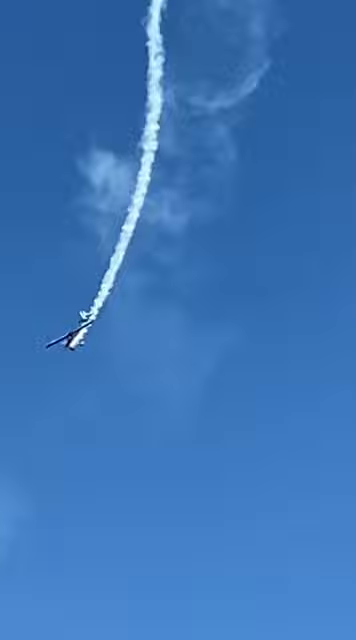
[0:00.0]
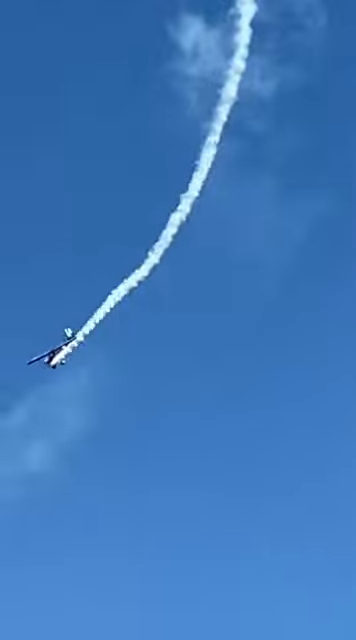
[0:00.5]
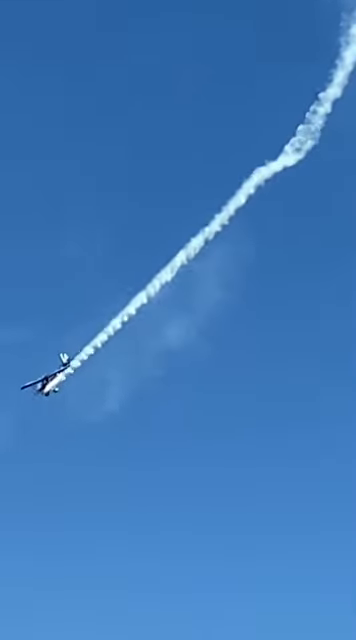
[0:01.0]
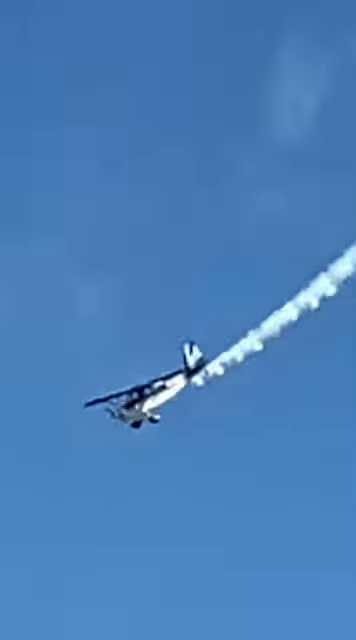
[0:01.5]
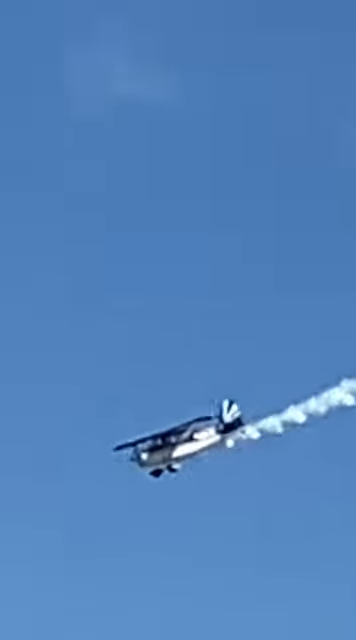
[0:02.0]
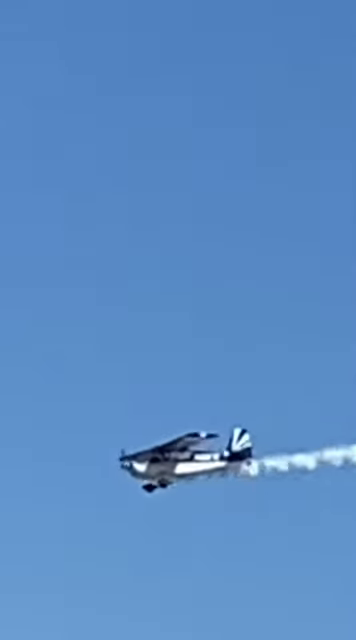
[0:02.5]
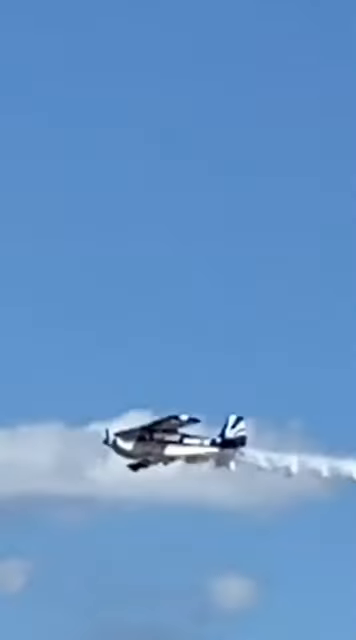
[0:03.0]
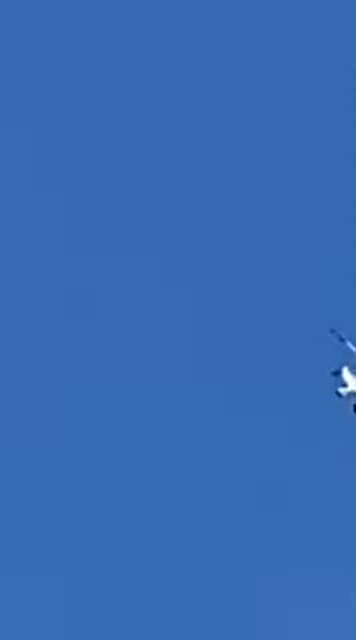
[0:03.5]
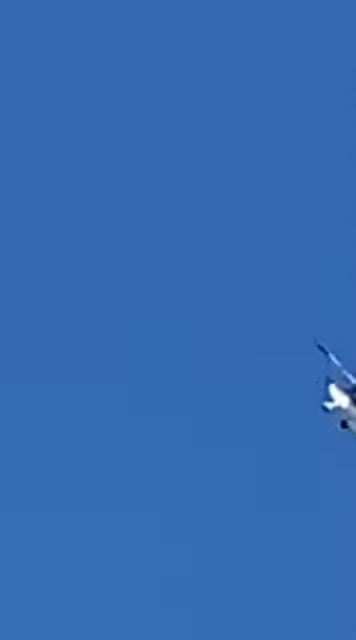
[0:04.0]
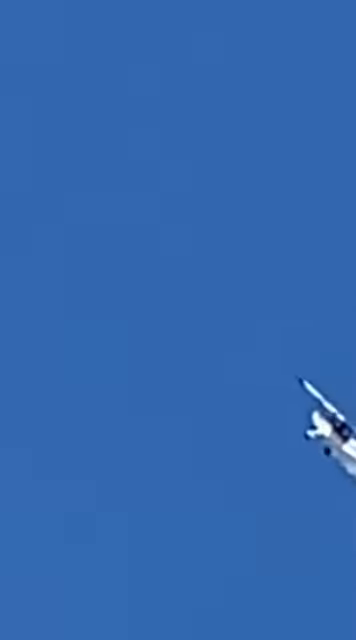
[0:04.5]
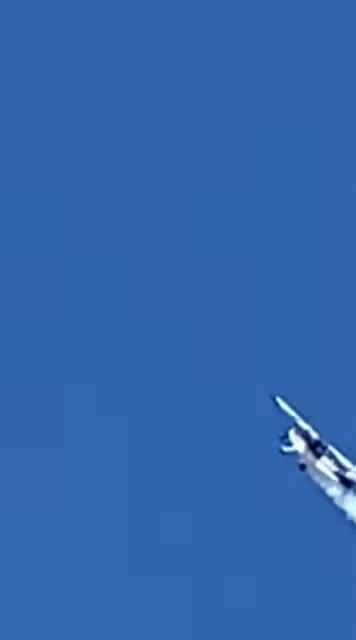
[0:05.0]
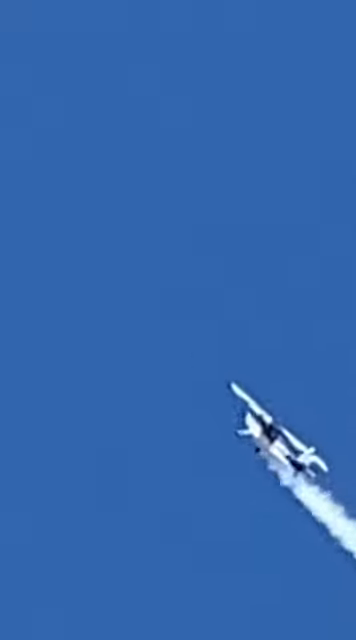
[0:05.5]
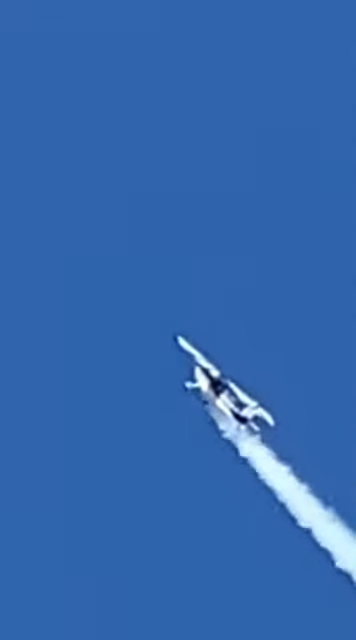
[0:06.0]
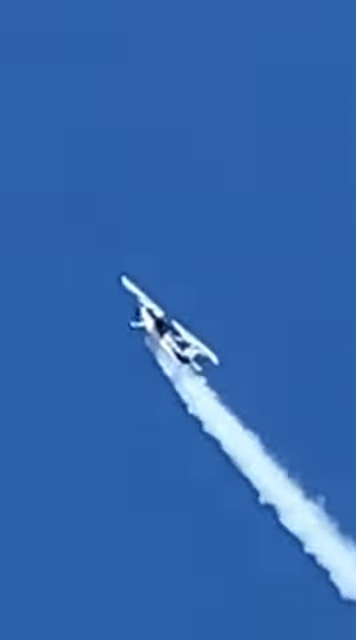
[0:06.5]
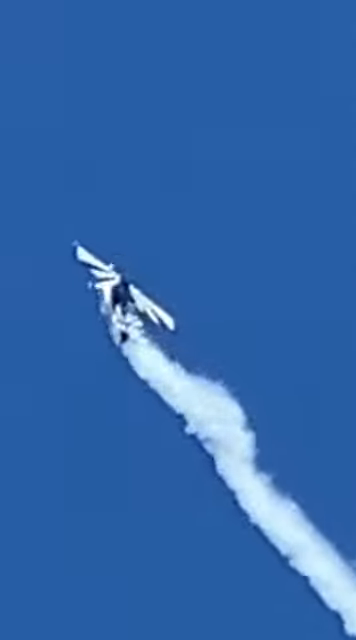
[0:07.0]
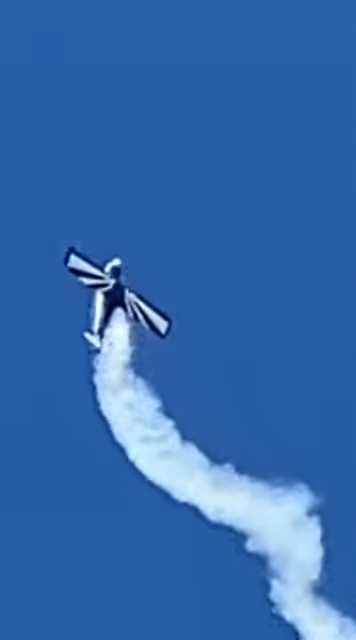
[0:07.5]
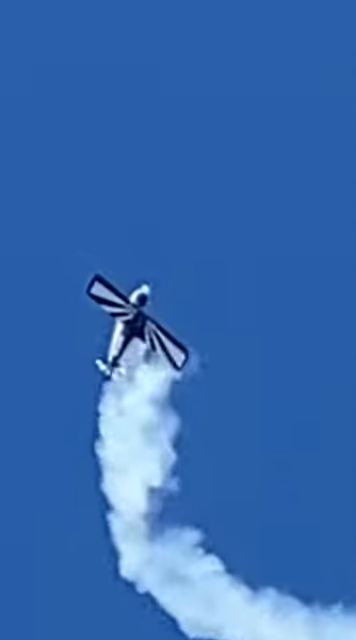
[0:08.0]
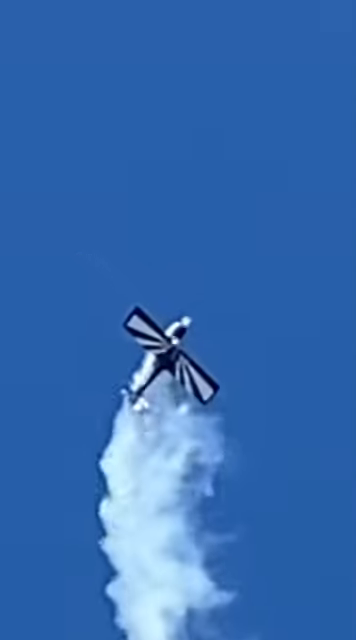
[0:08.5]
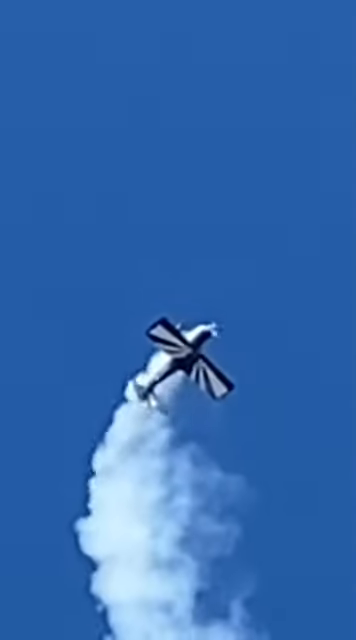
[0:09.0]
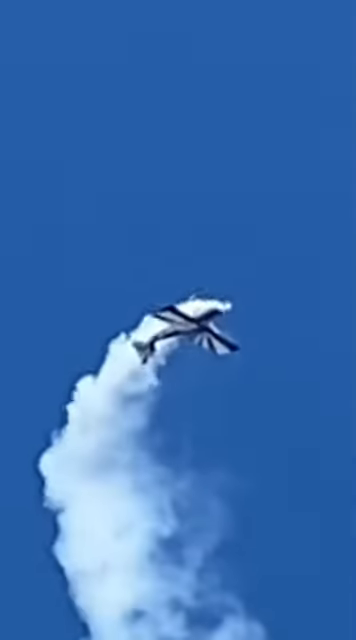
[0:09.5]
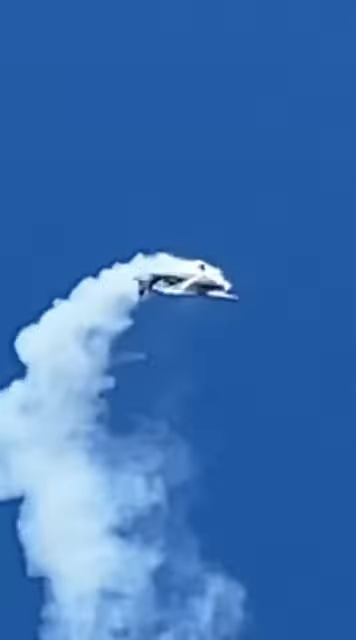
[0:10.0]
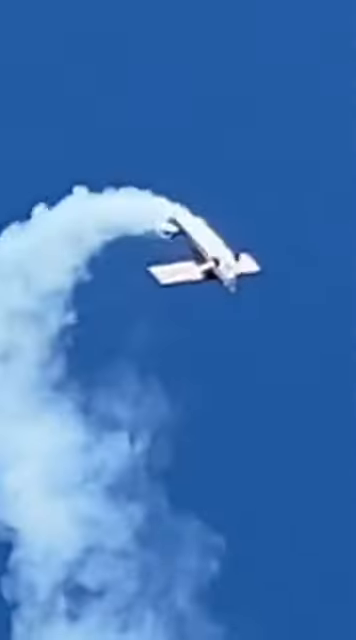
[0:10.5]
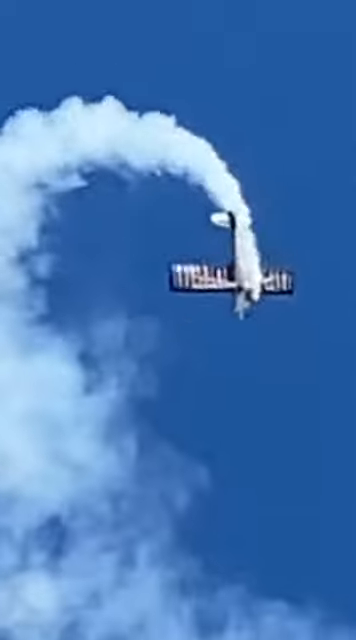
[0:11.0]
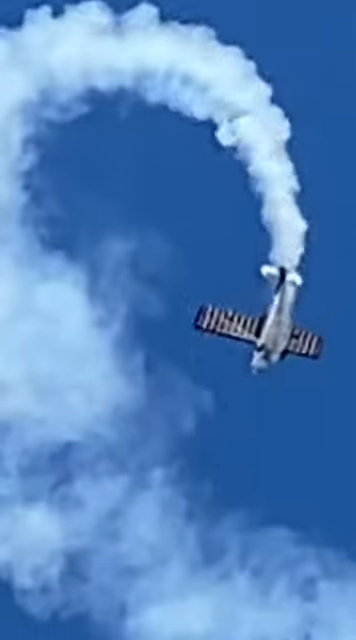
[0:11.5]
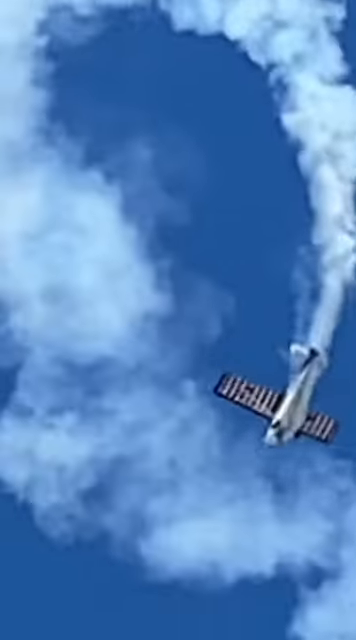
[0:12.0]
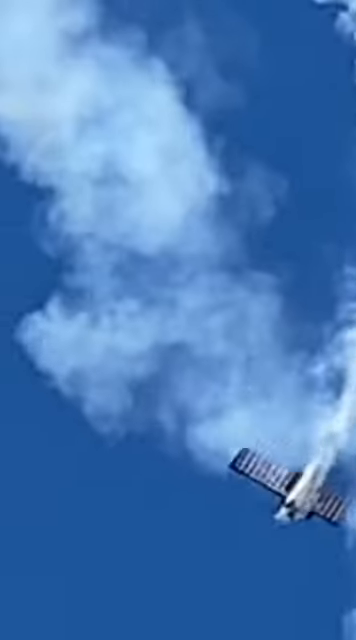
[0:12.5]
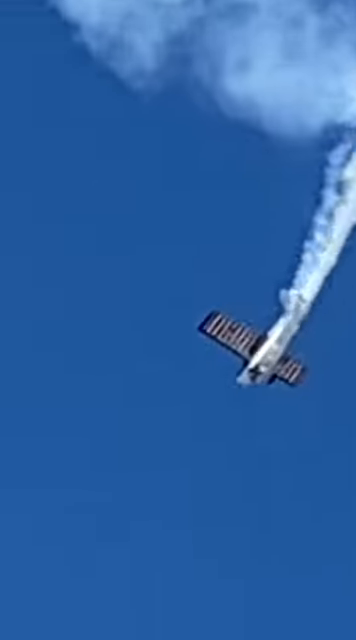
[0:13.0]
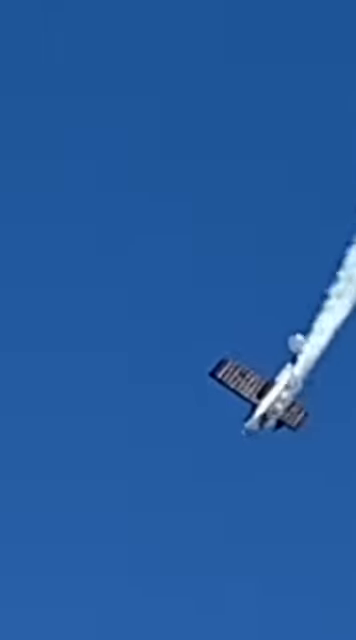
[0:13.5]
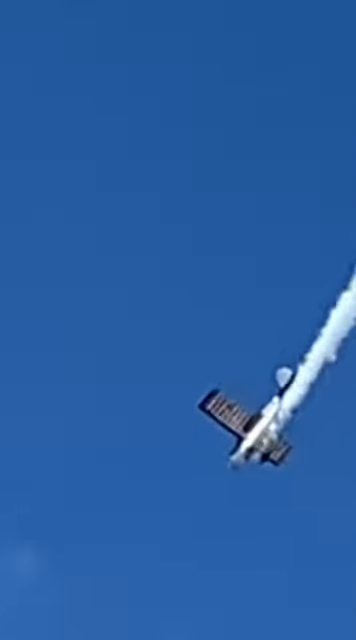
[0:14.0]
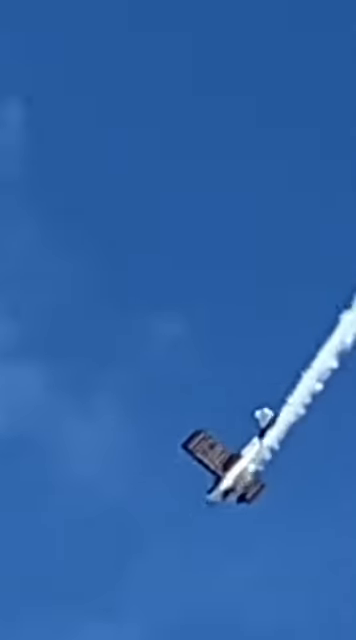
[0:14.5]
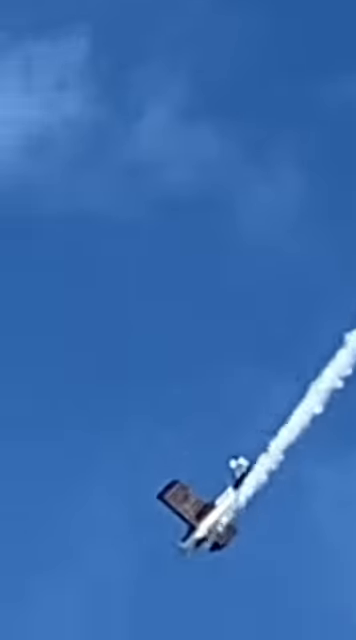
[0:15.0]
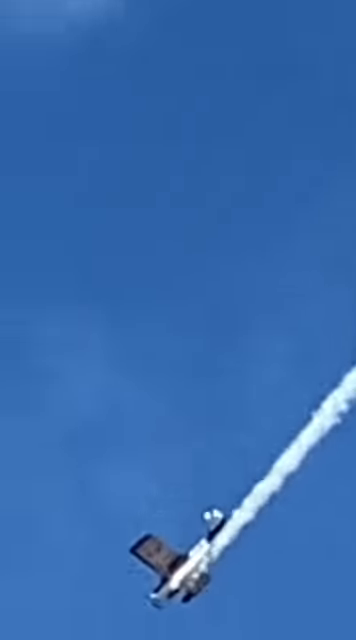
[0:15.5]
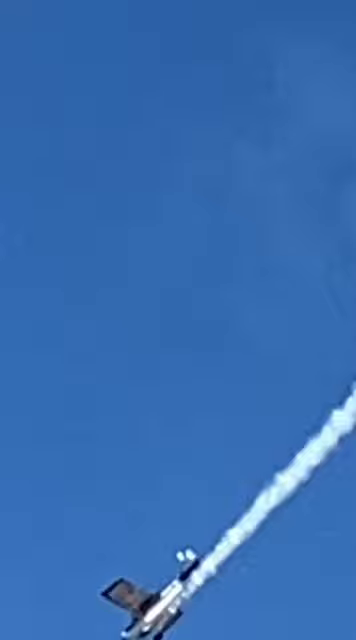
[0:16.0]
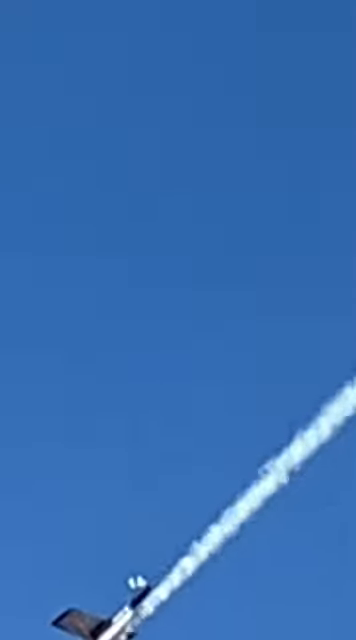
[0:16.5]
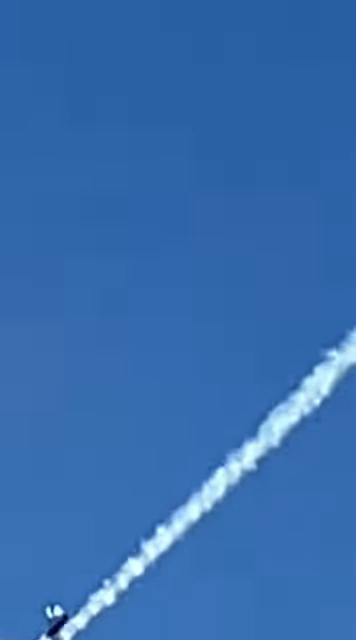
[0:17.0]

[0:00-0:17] An aerial shot, angled up at the air, follows what looks like a biplane, a stunt plane, emitting a very thick white contrail as it does maneuvers across the sky. The camera tracks it and then zooms in on the plane, which looks like a single-passenger plane. The plane dives up at a steep angle, billowing thick white clouds behind it in a thick stream like a contrail, apparently sprayed out of devices meant for that purpose. As it dives upward, the plane is almost upside down in the sky. The wings carry what is almost a rising sun design. The plane does a sort of backflip looping maneuver, billowing smoke everywhere. The underside of the wings has stripes, which look red and white. The plane appears to be white, maybe red and blue.